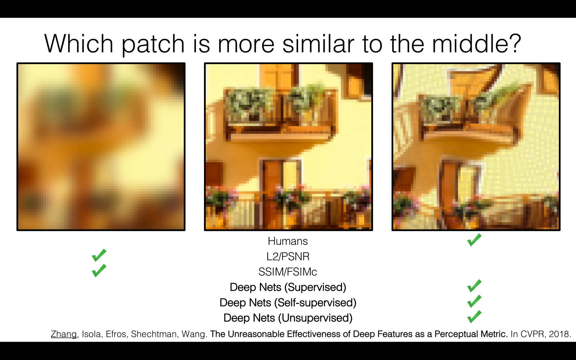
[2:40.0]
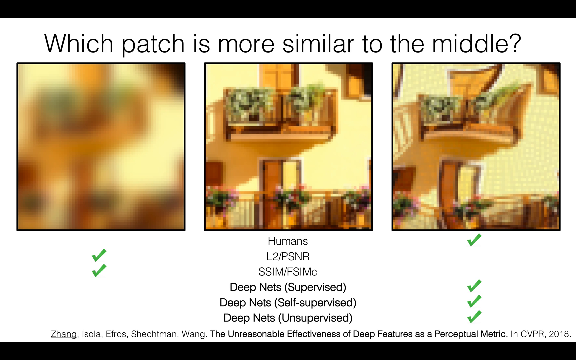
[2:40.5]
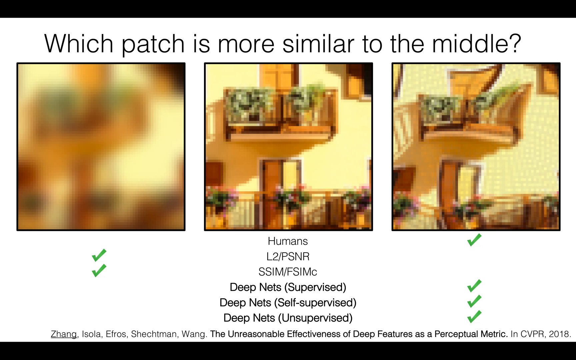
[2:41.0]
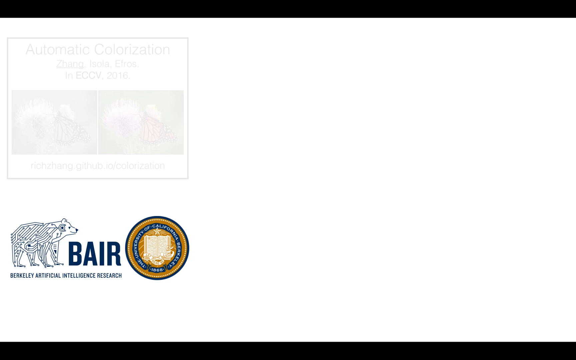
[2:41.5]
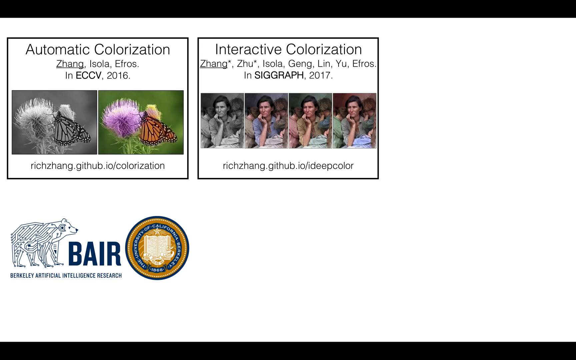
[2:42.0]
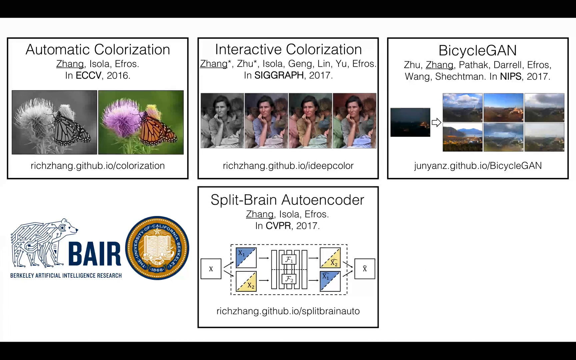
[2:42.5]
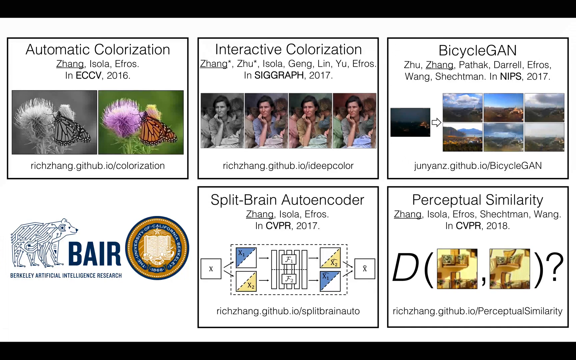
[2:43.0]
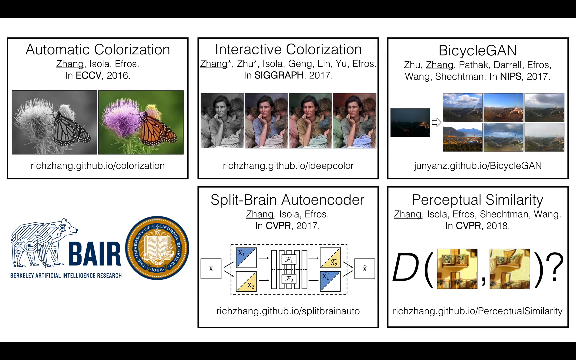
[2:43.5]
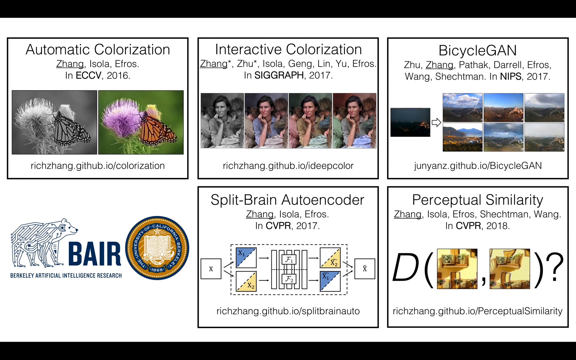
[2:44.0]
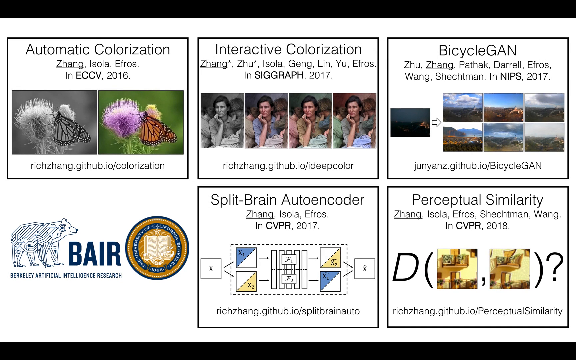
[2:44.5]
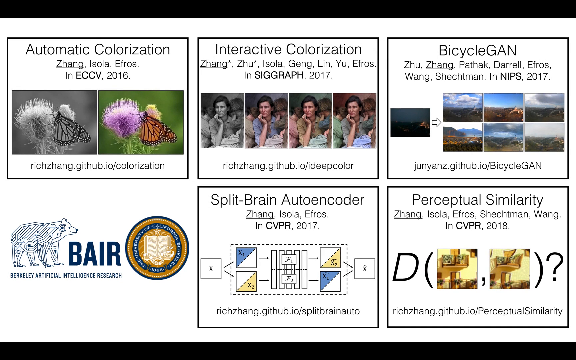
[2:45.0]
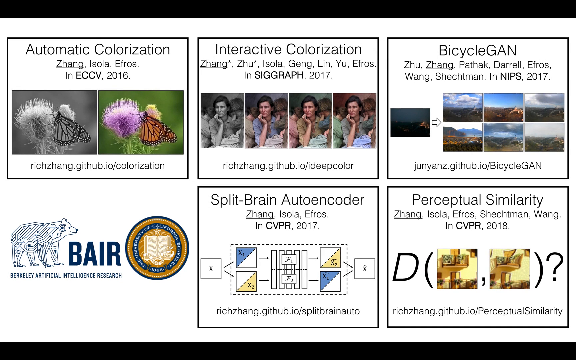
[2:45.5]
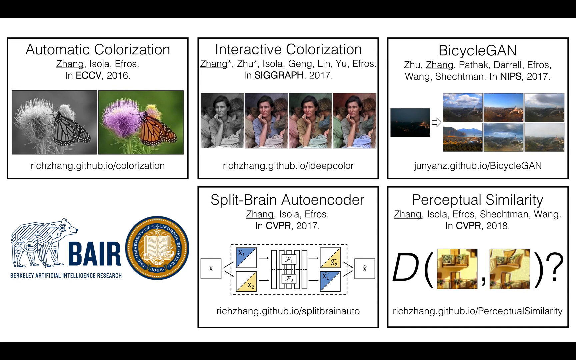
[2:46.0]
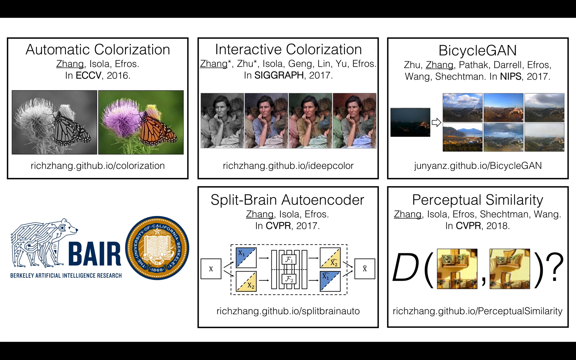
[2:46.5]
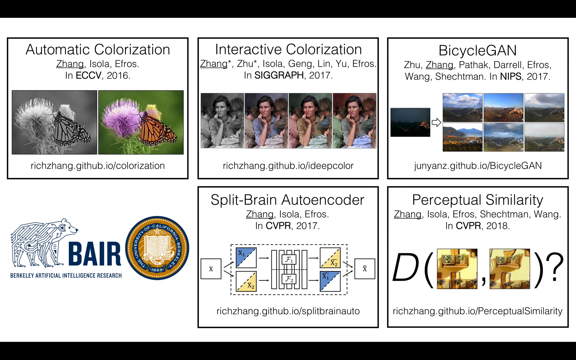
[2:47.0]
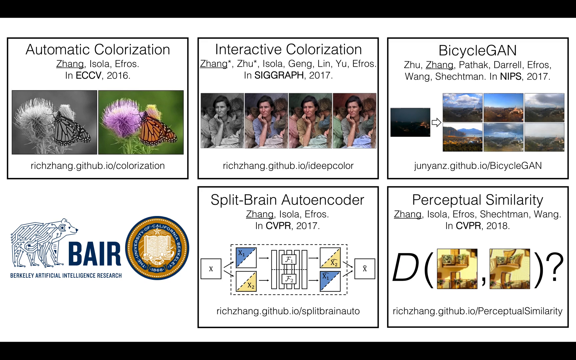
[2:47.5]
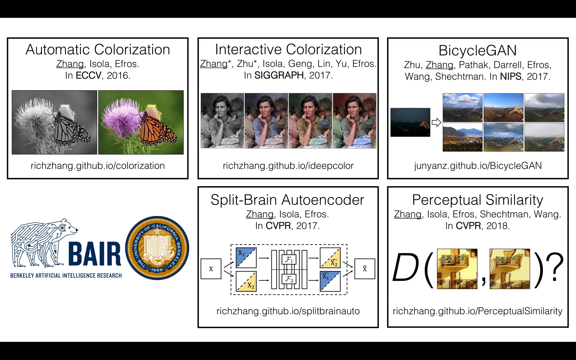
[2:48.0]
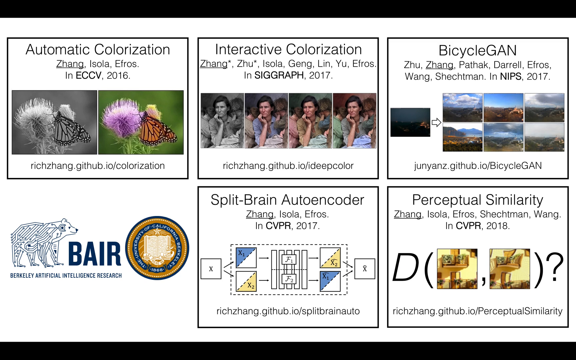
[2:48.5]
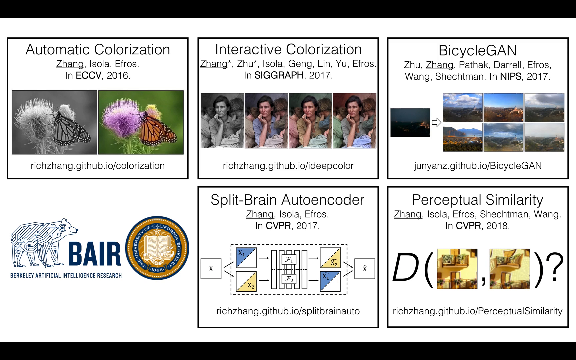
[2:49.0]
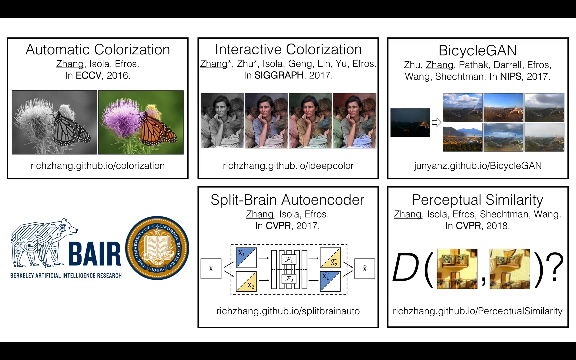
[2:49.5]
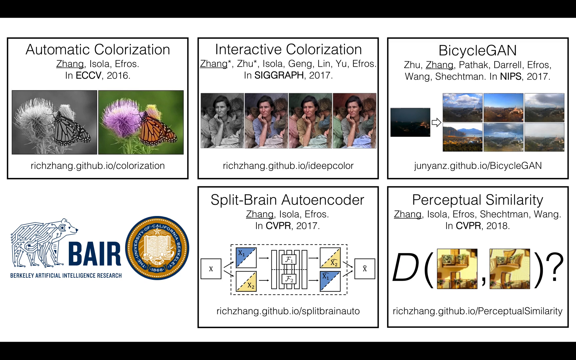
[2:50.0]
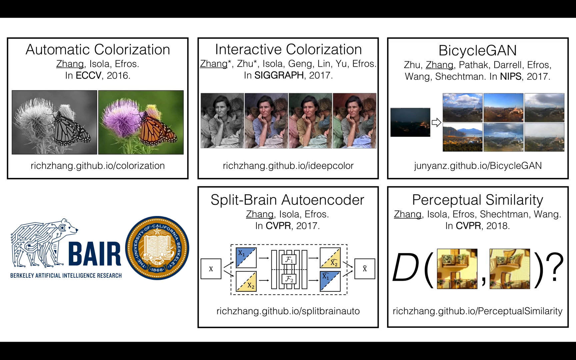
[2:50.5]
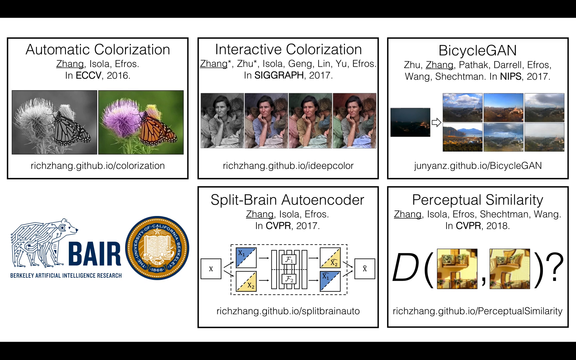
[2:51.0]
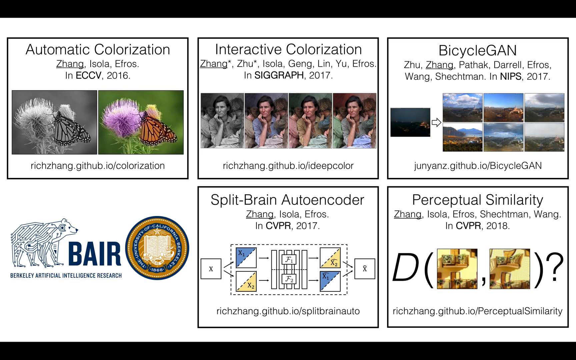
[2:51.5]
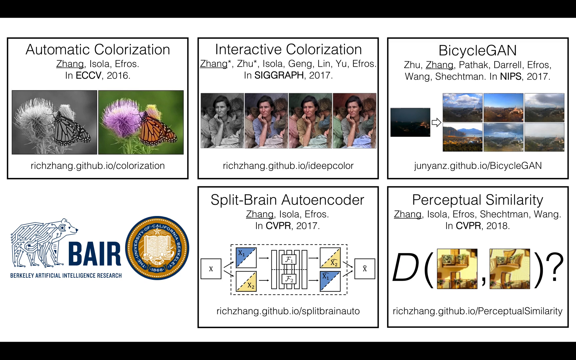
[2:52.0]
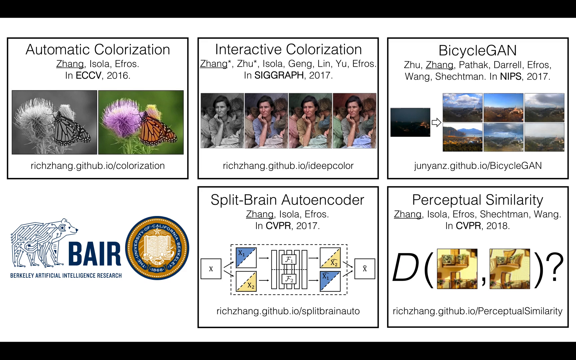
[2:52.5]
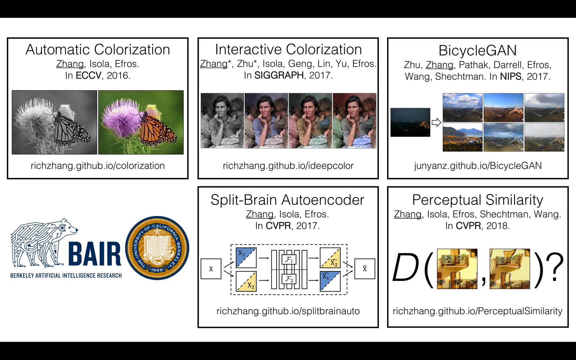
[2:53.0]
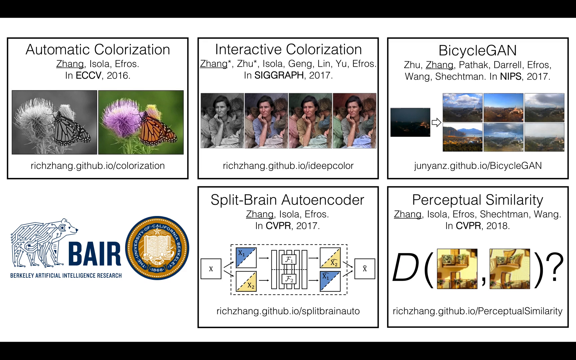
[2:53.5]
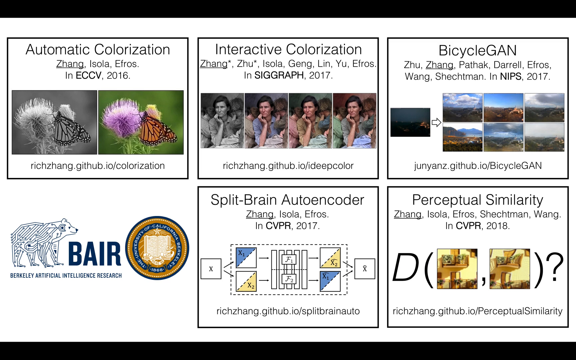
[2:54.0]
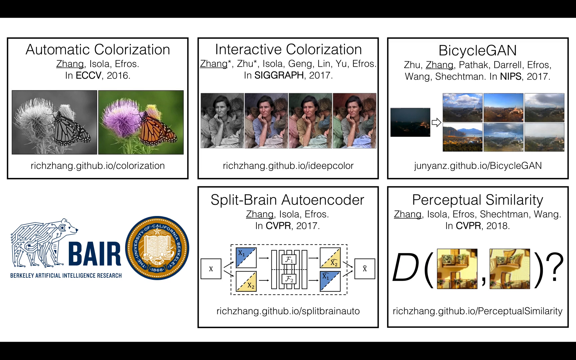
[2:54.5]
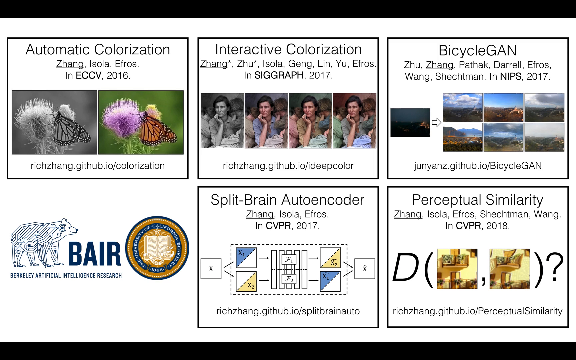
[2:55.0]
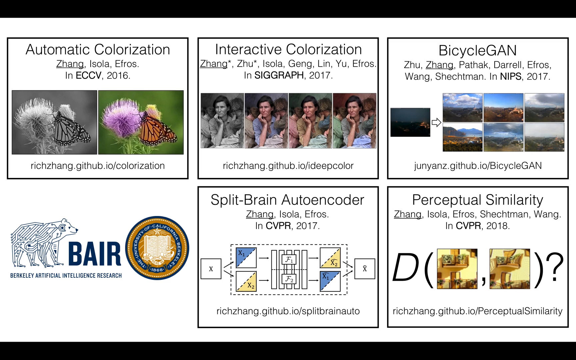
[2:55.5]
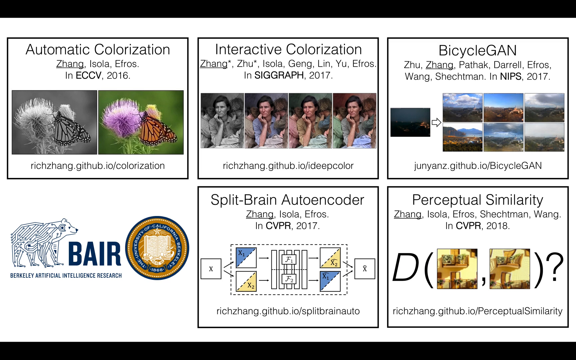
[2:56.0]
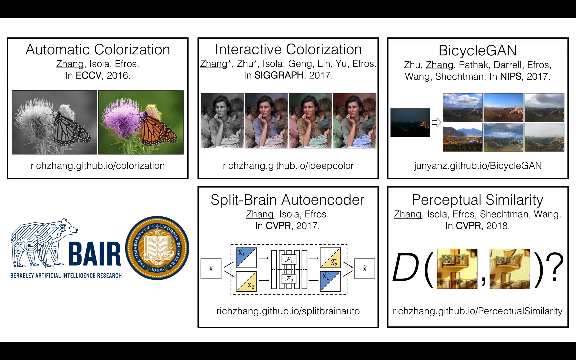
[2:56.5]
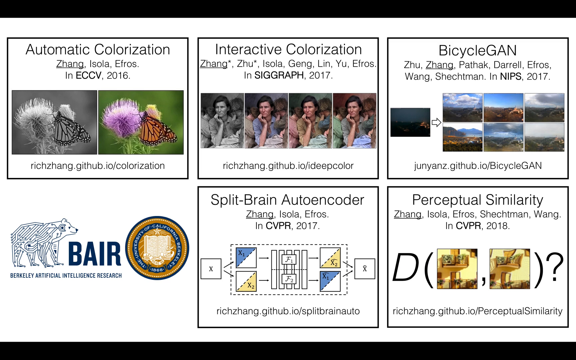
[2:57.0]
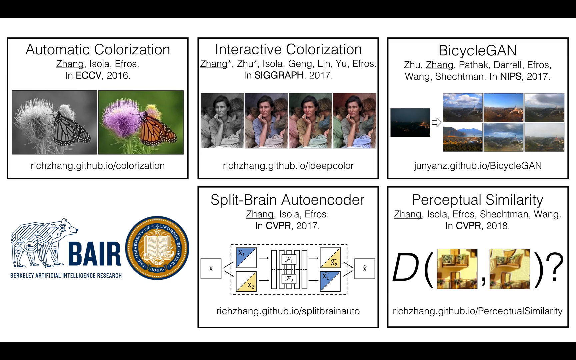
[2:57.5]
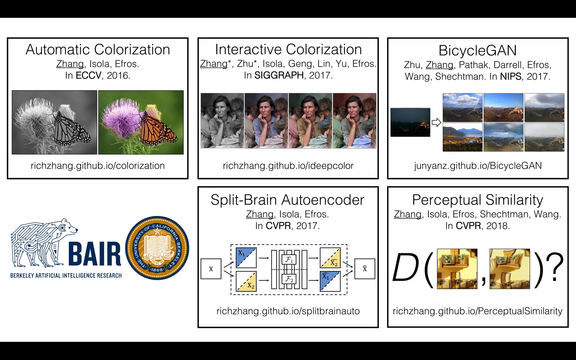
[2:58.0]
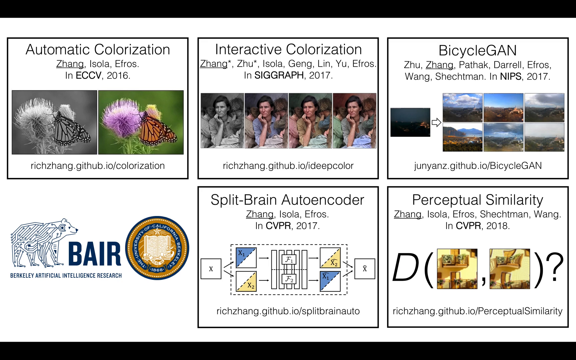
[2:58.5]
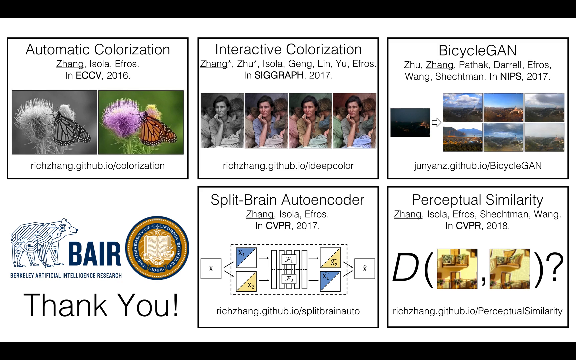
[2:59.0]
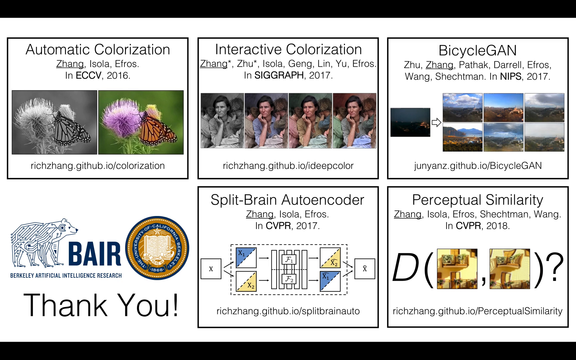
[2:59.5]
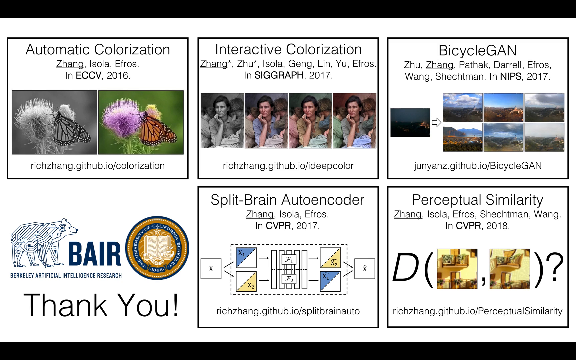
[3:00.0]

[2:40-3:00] Three square boxes are in the middle of the screen, with "which patch is more similar to the middle" at the top middle. The left image is very blurry with an orange and creamy look. The middle box is slightly blurry but shows more of the image, which looks like a balcony in yellowish and orange tones with green bushes outside. The box on the far right is the same image as the middle one but slightly distorted. Underneath the middle image are the words "Humans," "L2PSNR," "SSIM" and "FSIMC," beneath that "deep nets," then "deep nets self-supervised," then "deep nets." Green check marks appear on the left and right sides, with the blurry photo on the left having two and the slightly distorted one having four. The scene then changes to six boxes with different titles, including "automatic colorization," "interactive colorization," "bicycle GAN," one reading "split brain autoencoder," and, in the bottom right, "perceptual similarity."